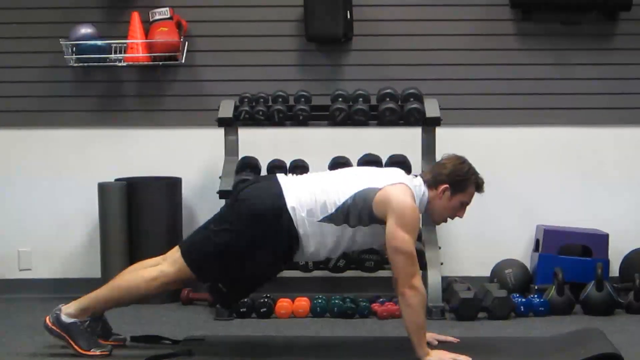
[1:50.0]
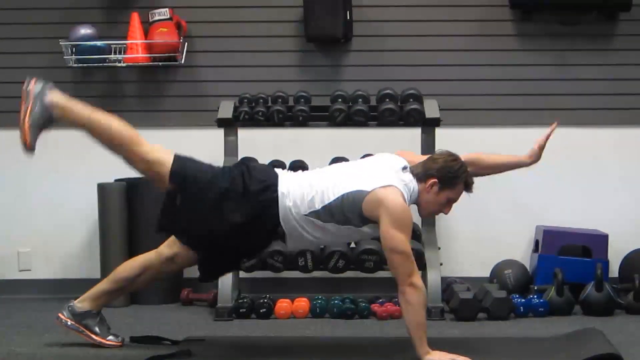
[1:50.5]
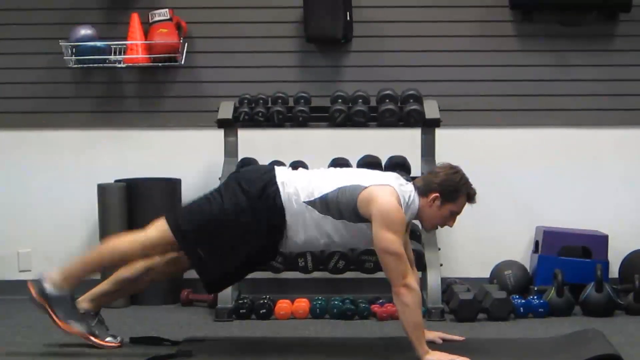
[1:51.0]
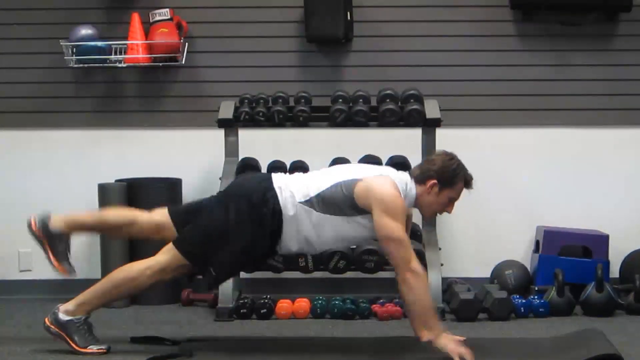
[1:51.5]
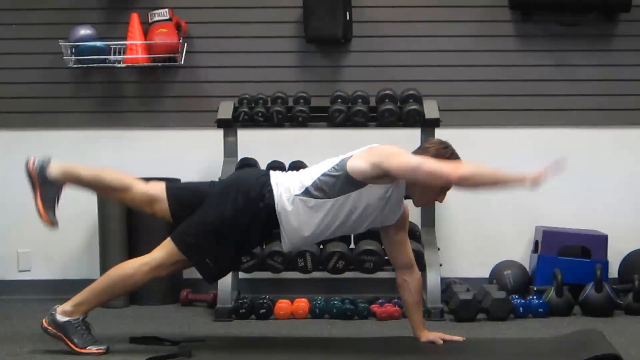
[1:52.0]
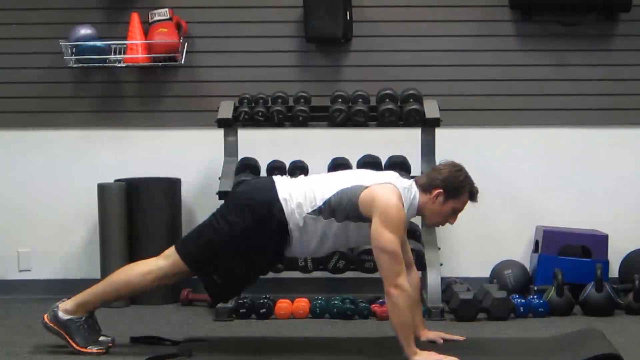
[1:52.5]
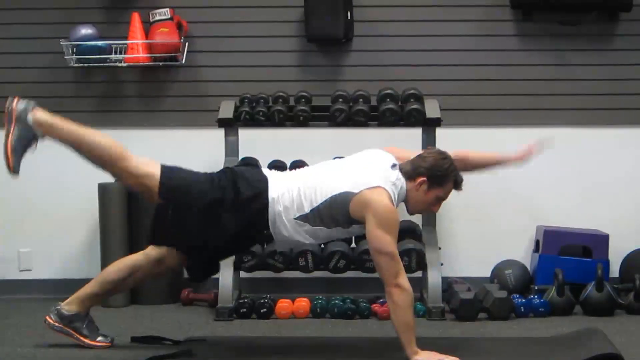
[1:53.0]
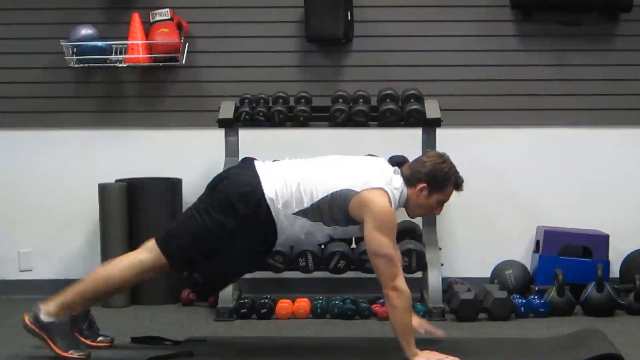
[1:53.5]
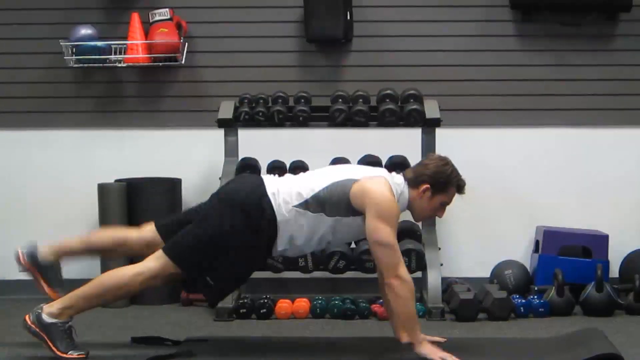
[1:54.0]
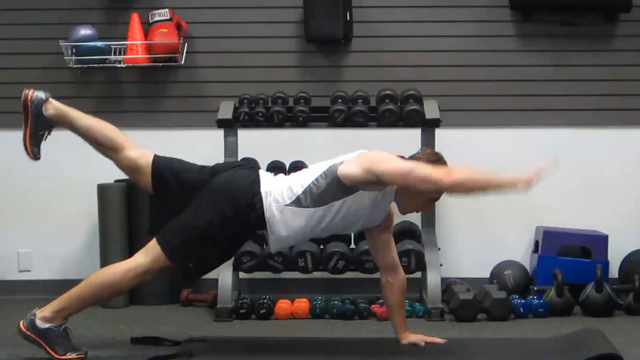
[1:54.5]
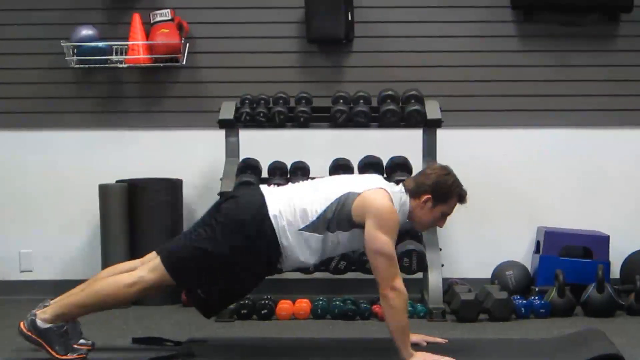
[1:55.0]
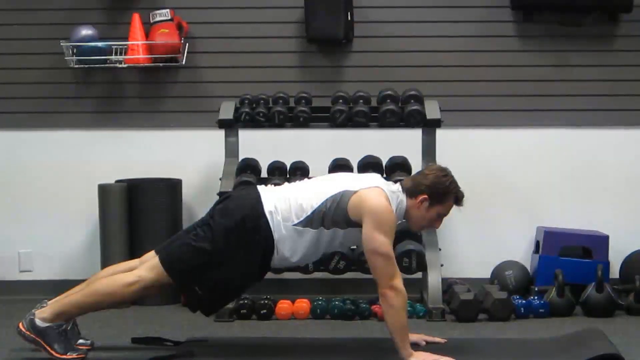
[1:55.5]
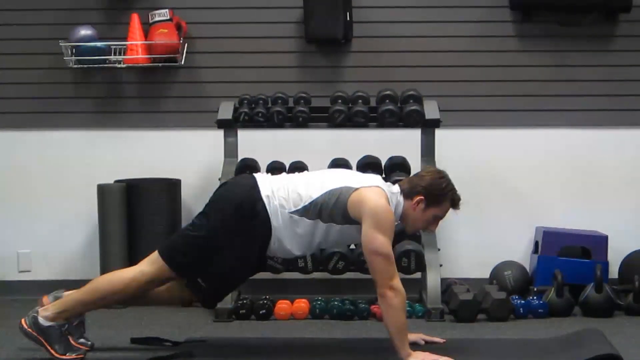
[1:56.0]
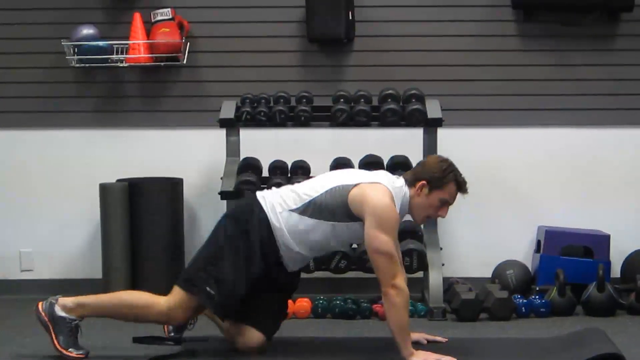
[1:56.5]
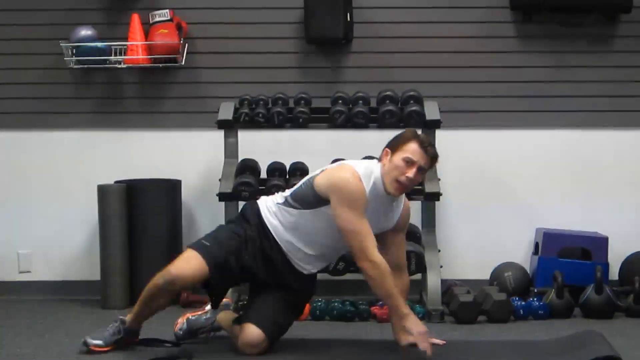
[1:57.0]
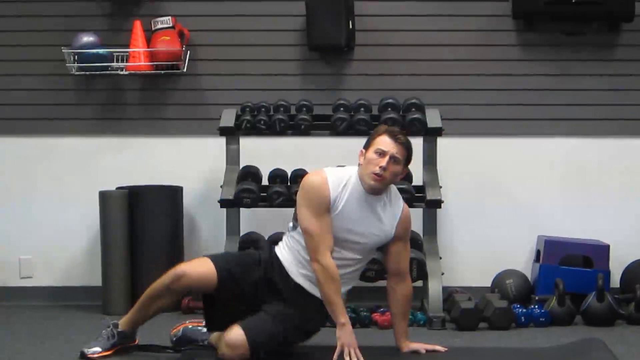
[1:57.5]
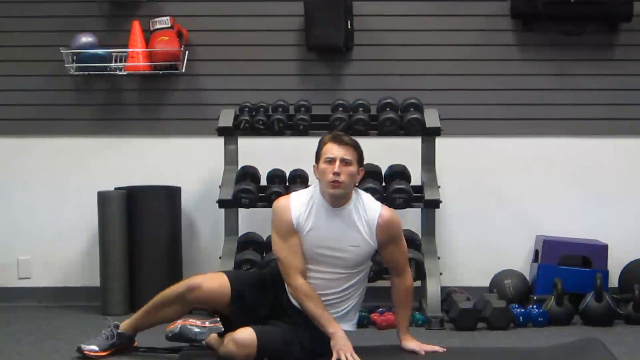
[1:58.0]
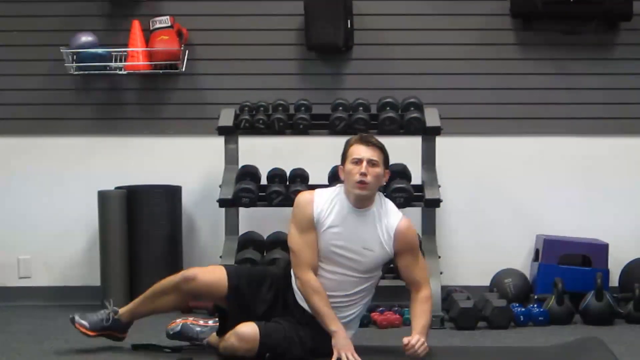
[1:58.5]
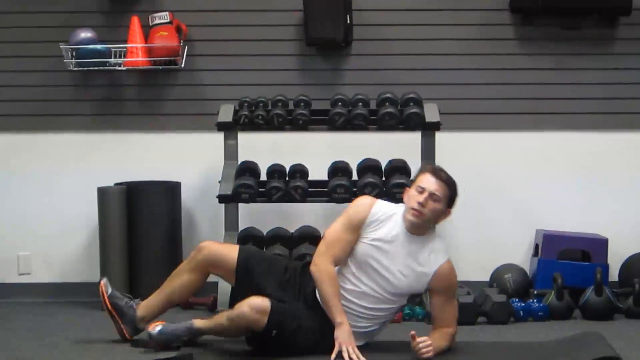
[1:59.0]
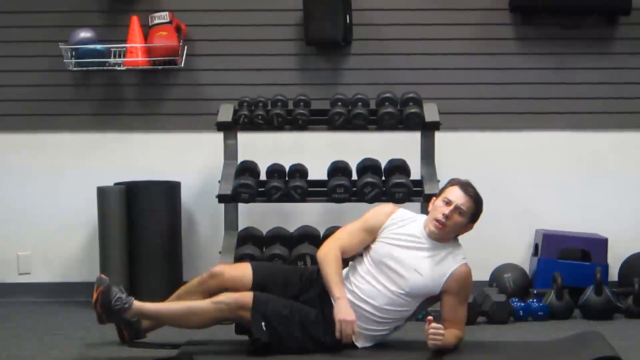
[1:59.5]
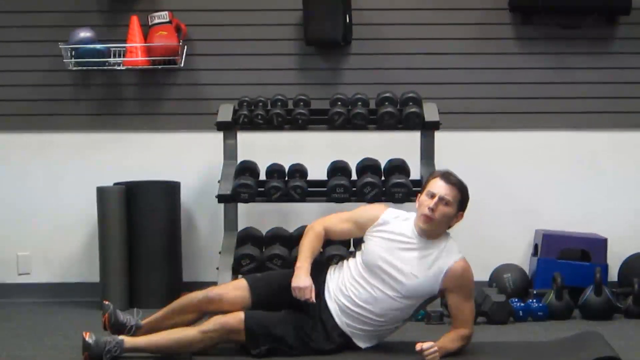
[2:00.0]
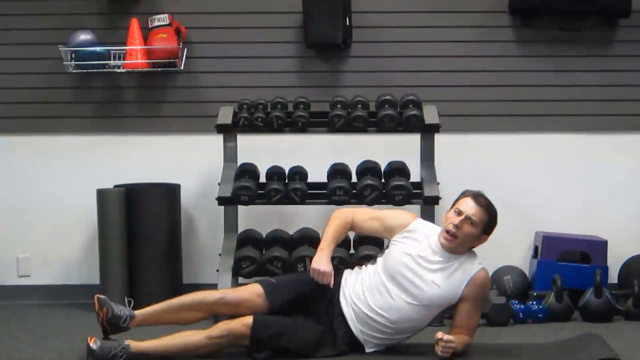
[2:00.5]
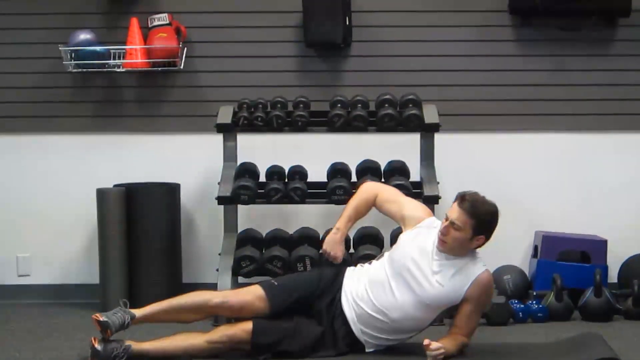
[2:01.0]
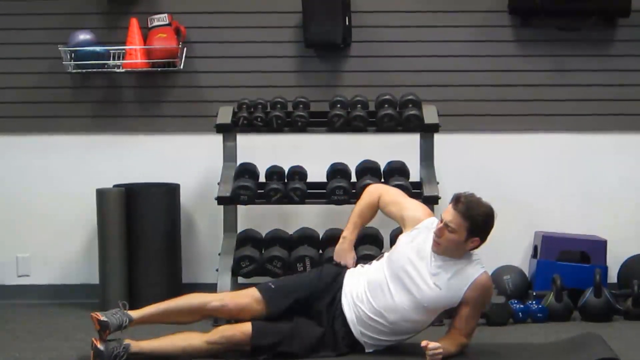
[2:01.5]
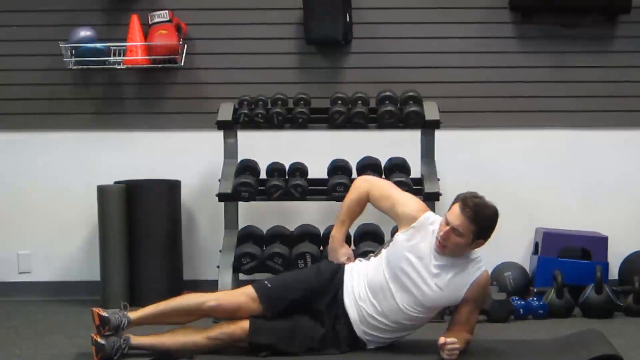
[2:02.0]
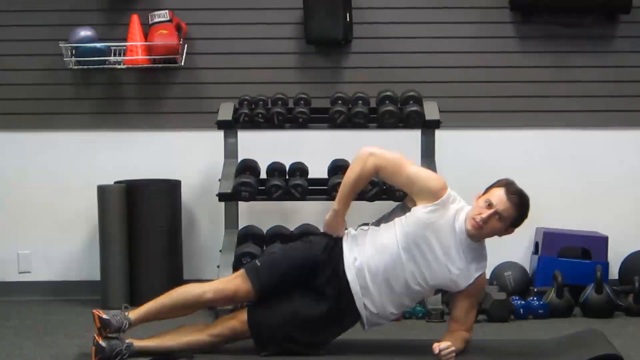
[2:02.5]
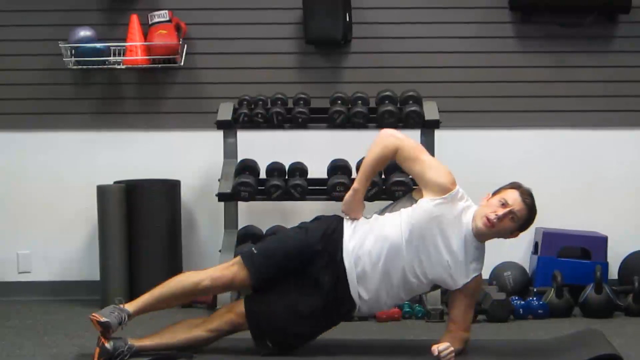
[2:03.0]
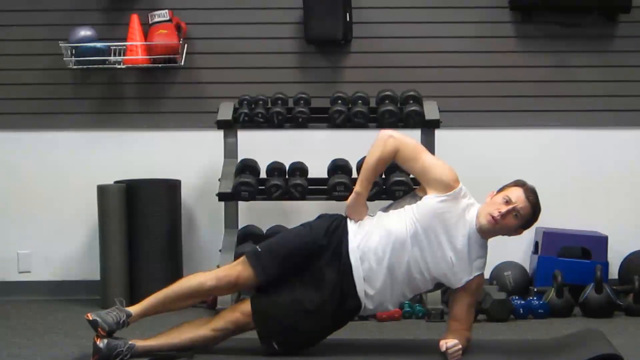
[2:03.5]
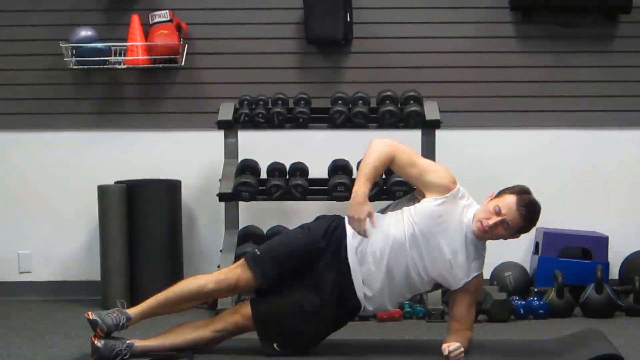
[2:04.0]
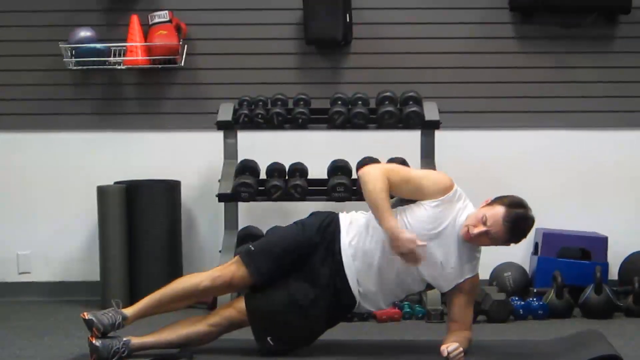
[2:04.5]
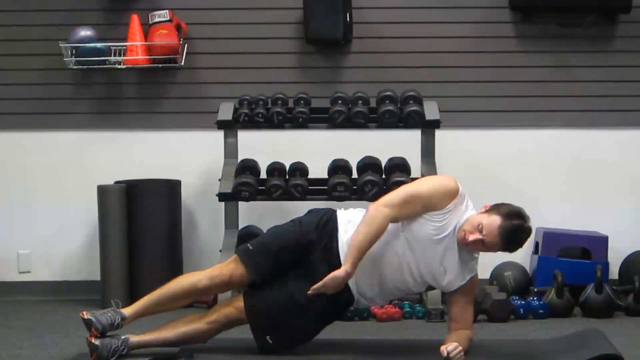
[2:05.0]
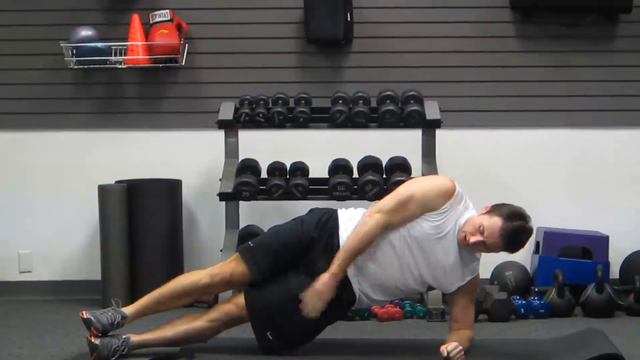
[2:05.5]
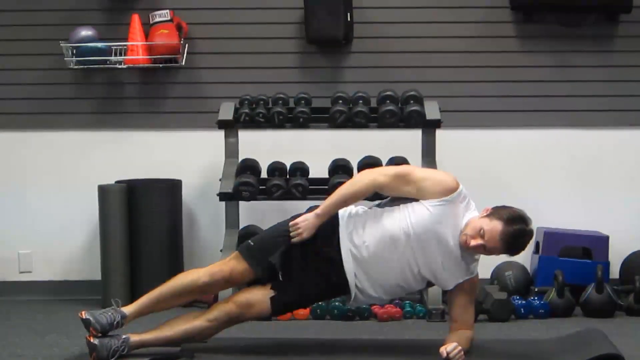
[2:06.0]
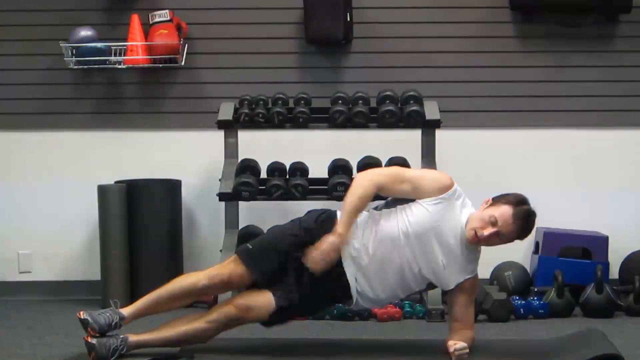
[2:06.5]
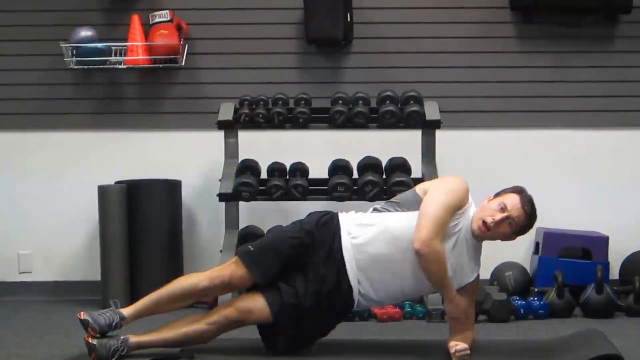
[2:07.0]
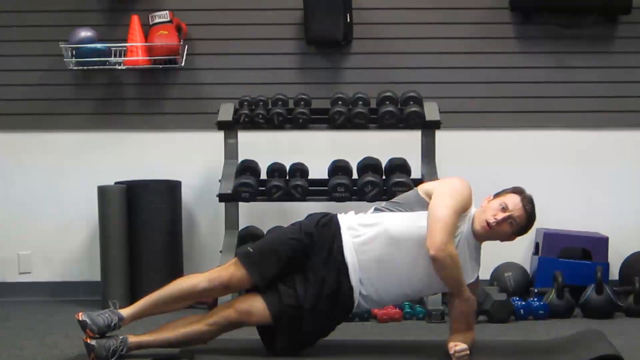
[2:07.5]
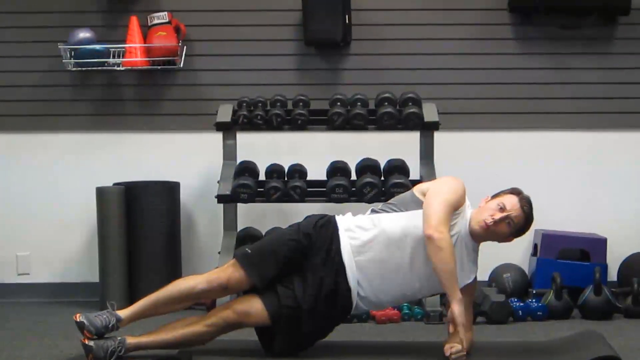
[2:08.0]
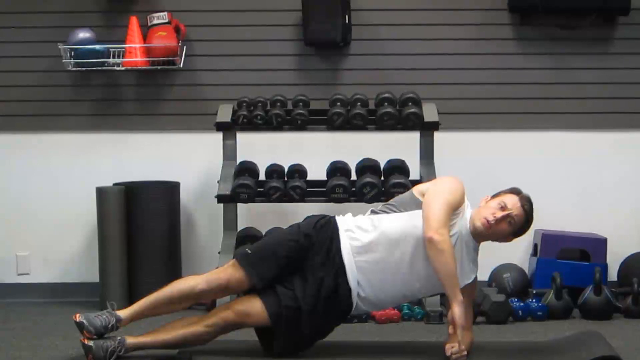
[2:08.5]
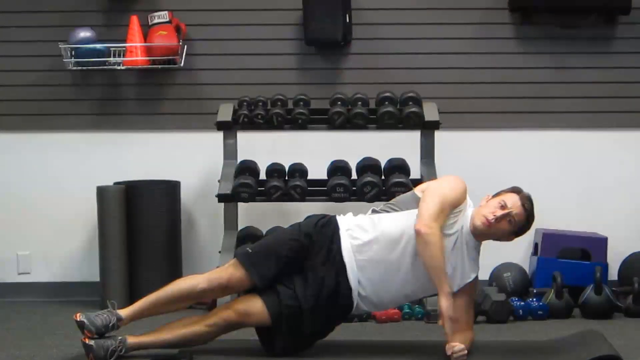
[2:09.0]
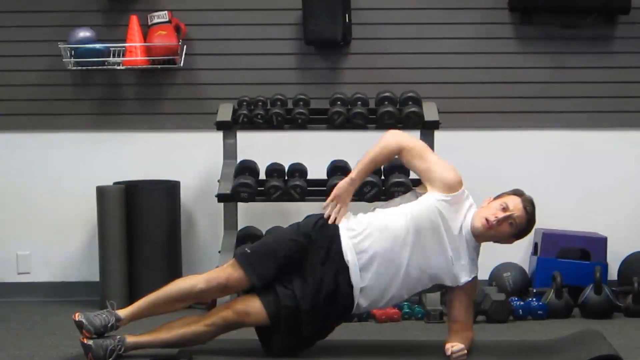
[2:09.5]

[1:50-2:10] In a push-up position, the man raises his left arm and his right leg as if swimming, then does the opposite with his right arm and left leg. He seems to do it at a very fast pace, probably switching every two or three seconds. He then puts his left knee down and turns his body toward the camera, using his arms to support himself. He seems to be sitting on his left side with his left elbow on the ground, talking and pushing his fist into his hip in an L shape. He then pushes himself up, leaning straight toward the camera while keeping his elbow locked at his hip, and pushes his body up into a balanced position, no longer on his side.